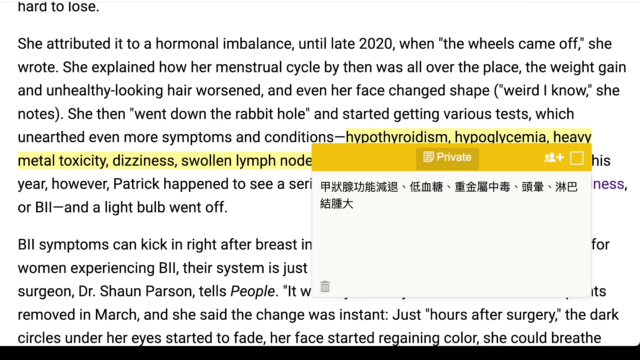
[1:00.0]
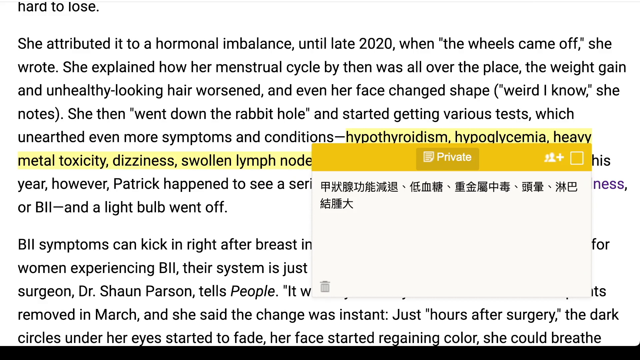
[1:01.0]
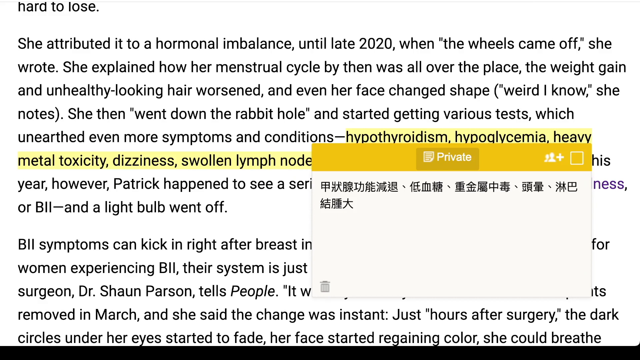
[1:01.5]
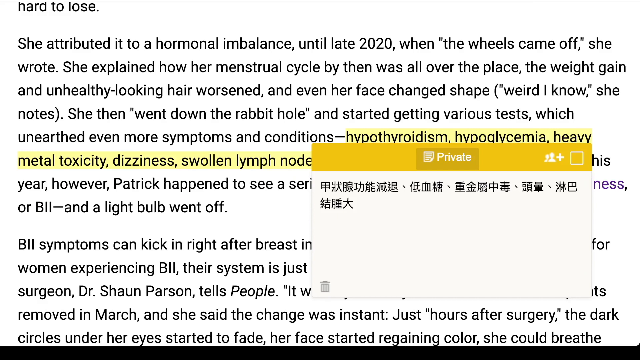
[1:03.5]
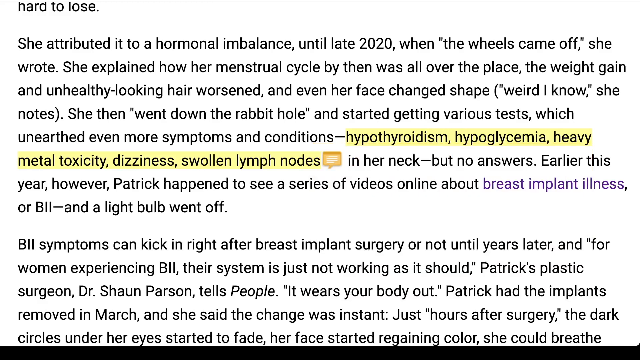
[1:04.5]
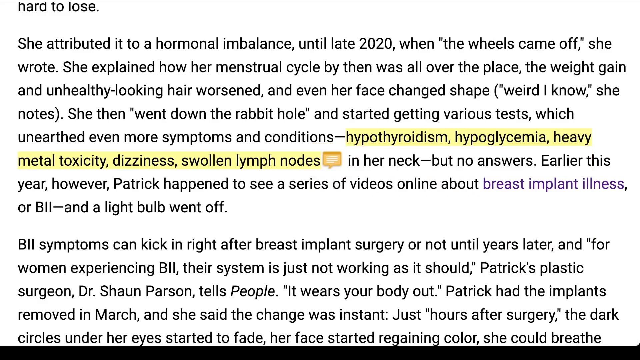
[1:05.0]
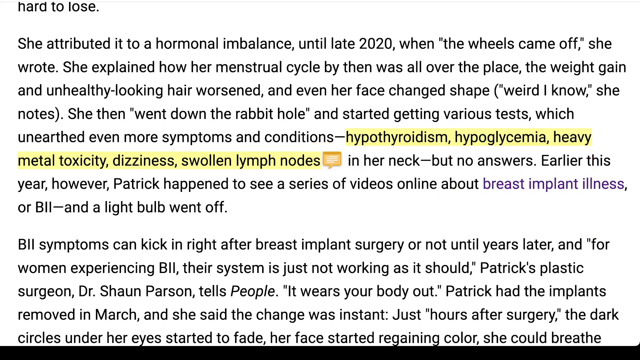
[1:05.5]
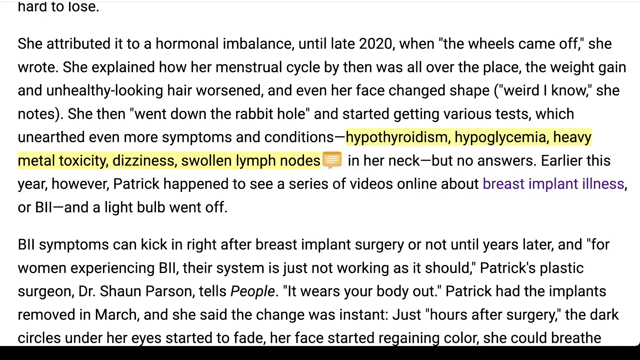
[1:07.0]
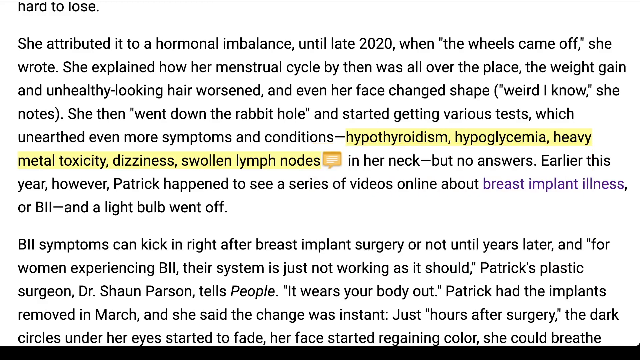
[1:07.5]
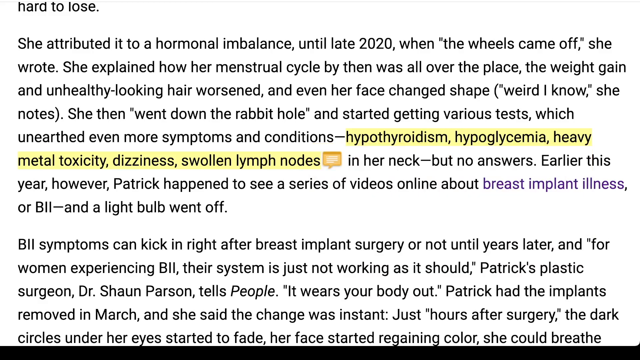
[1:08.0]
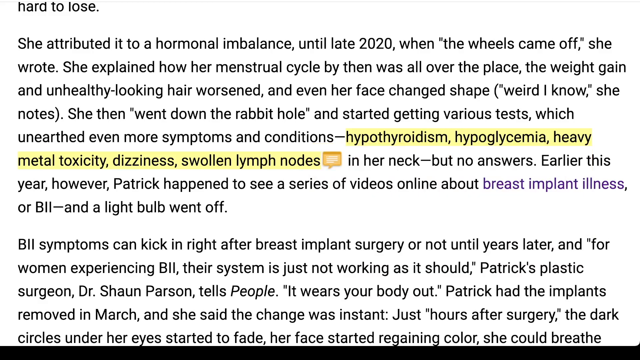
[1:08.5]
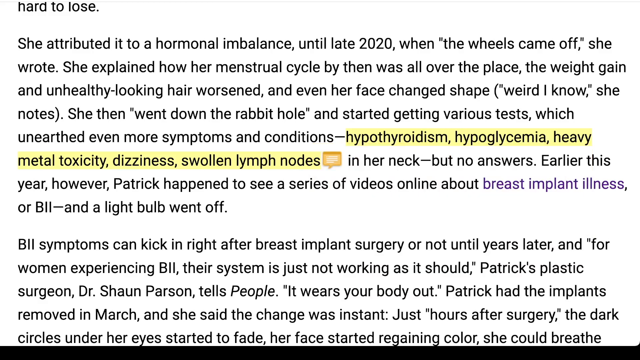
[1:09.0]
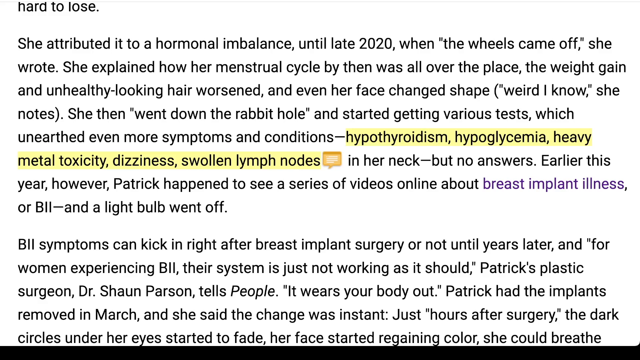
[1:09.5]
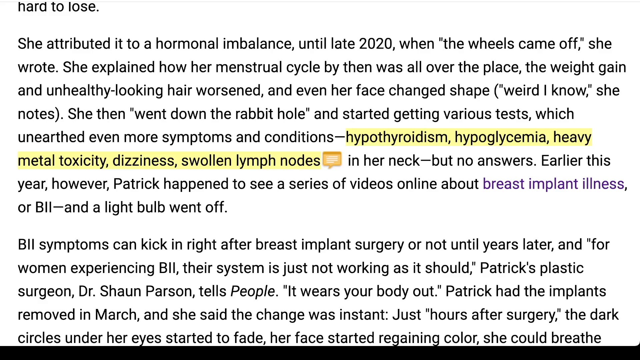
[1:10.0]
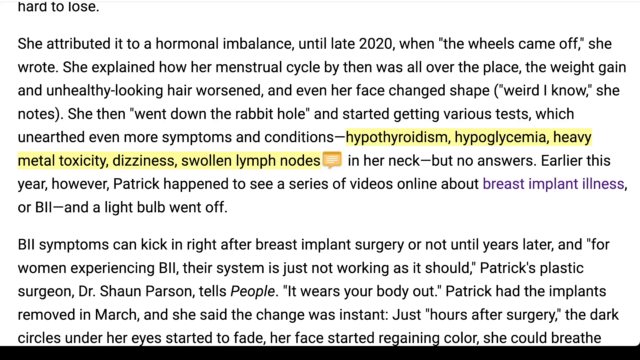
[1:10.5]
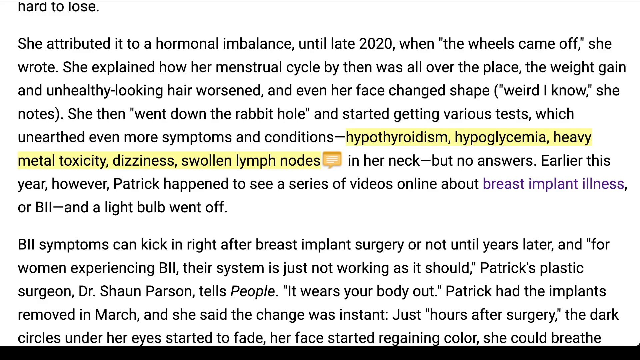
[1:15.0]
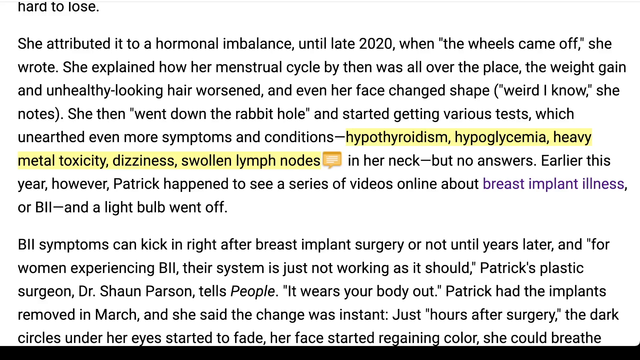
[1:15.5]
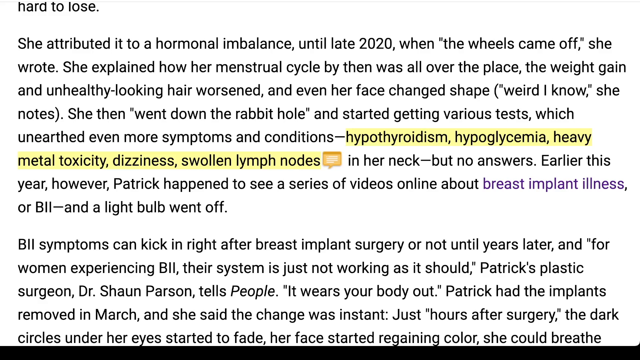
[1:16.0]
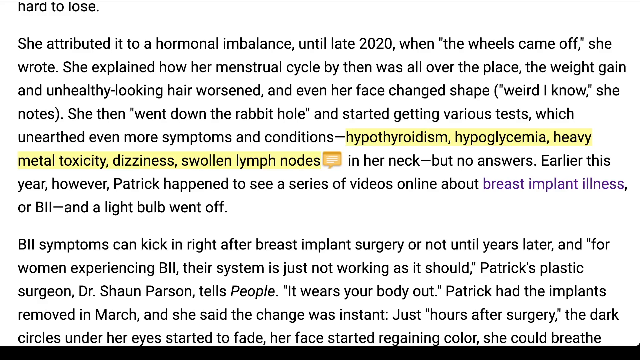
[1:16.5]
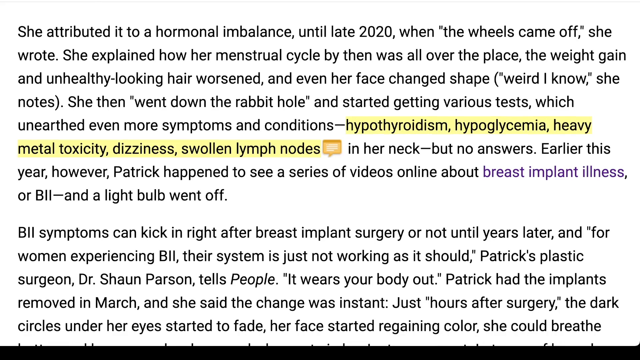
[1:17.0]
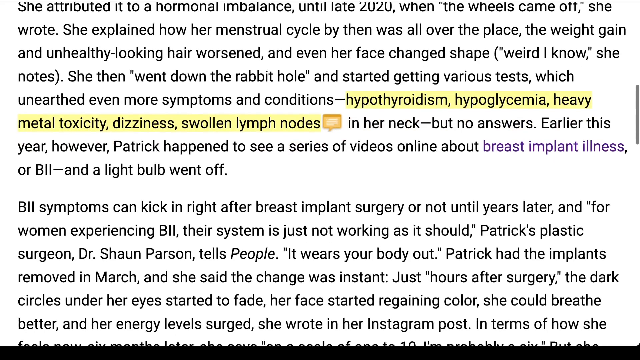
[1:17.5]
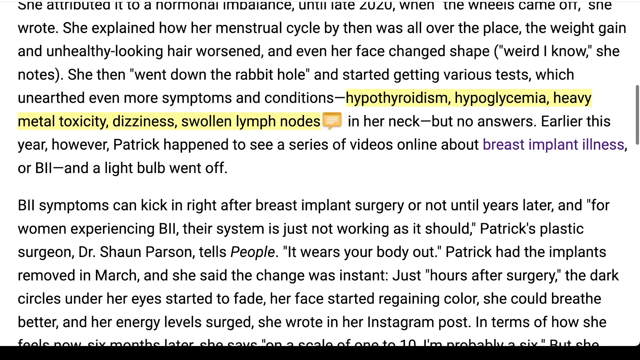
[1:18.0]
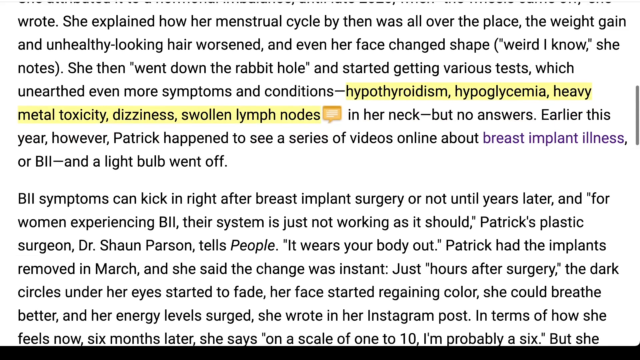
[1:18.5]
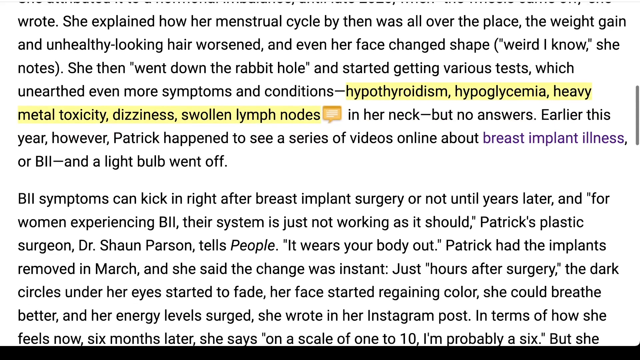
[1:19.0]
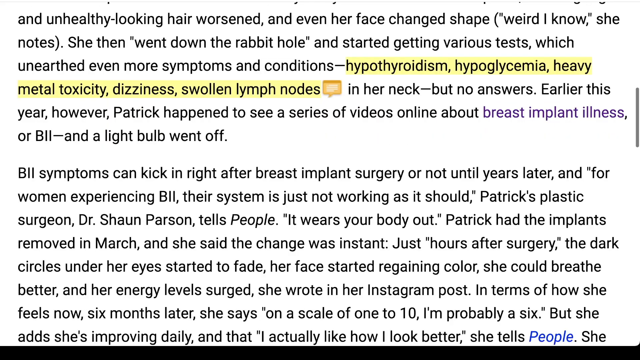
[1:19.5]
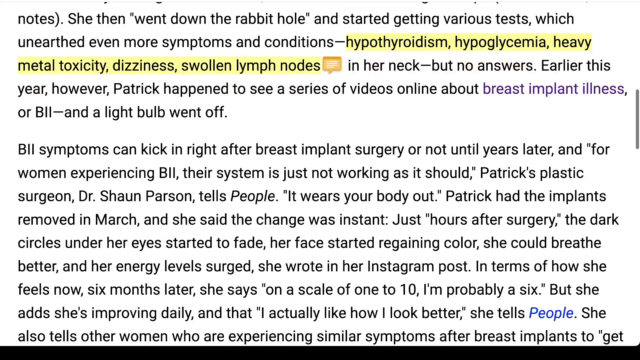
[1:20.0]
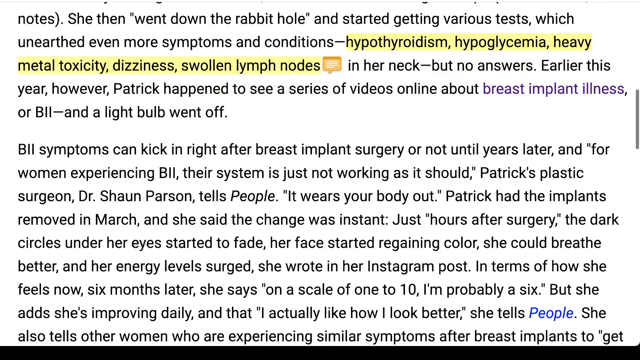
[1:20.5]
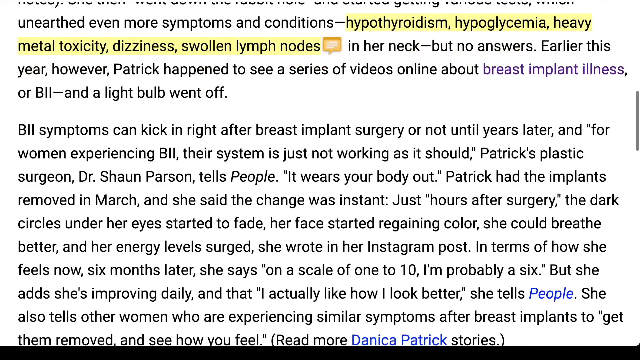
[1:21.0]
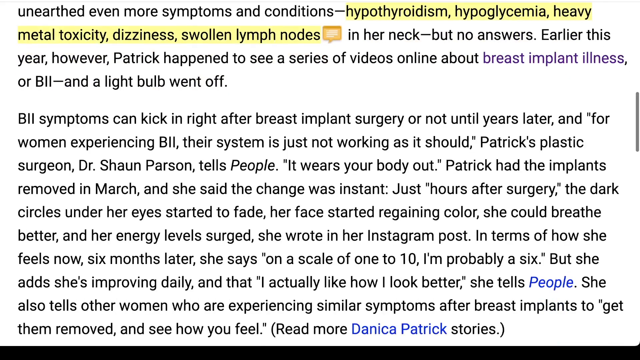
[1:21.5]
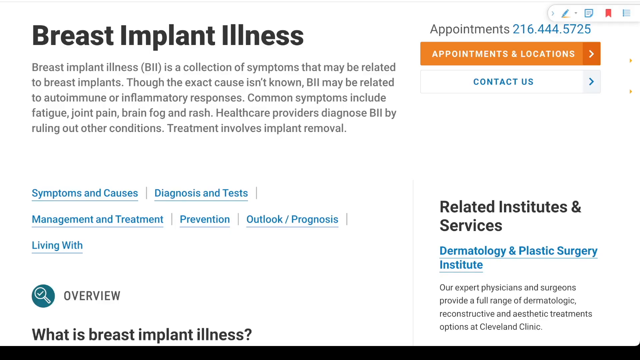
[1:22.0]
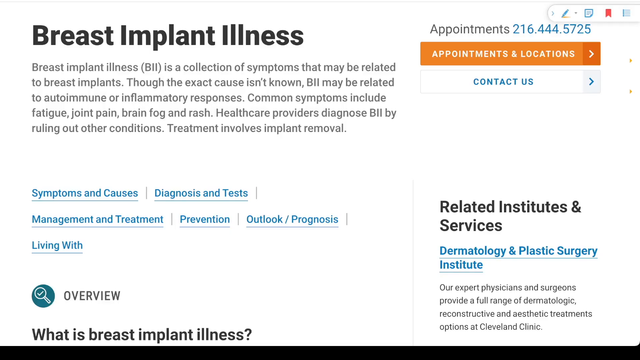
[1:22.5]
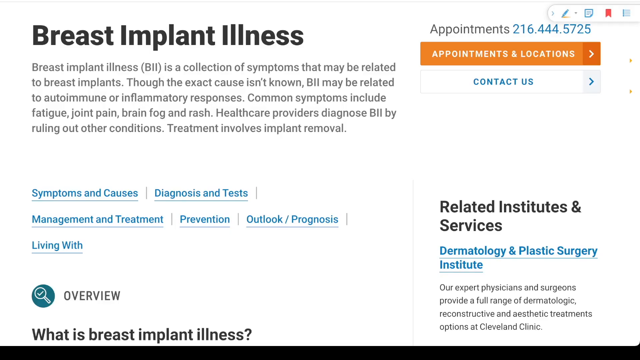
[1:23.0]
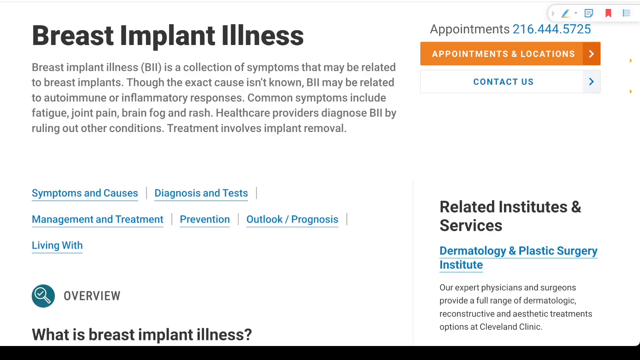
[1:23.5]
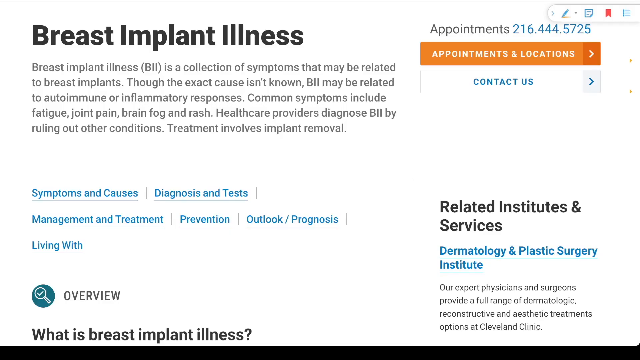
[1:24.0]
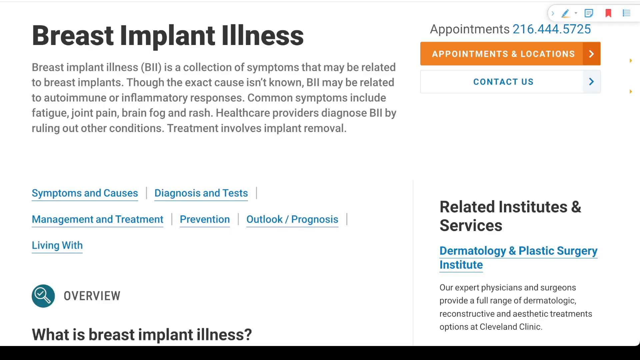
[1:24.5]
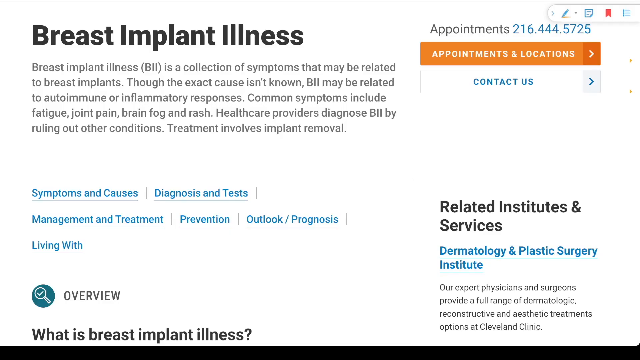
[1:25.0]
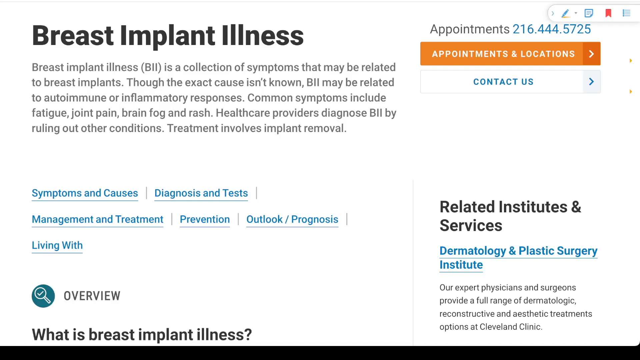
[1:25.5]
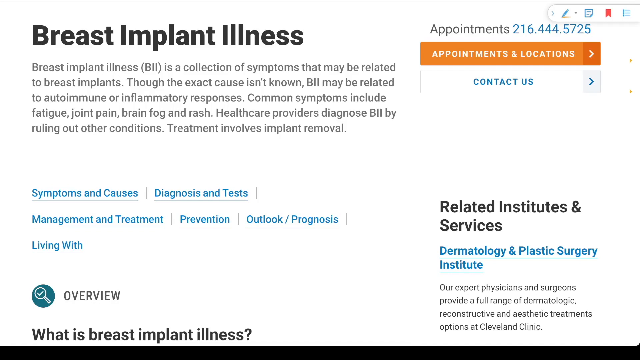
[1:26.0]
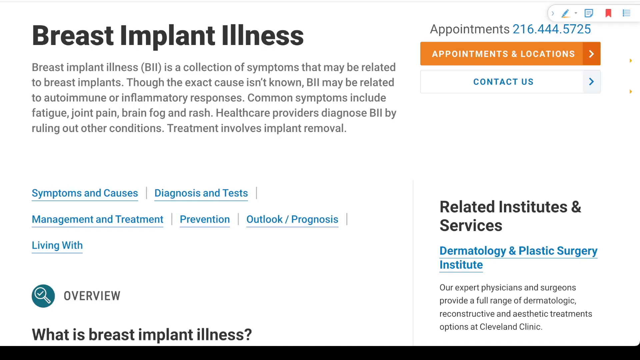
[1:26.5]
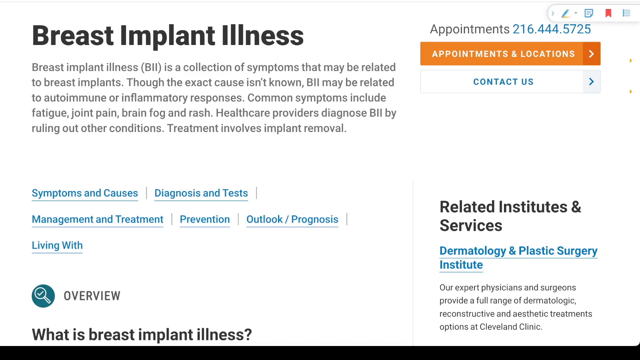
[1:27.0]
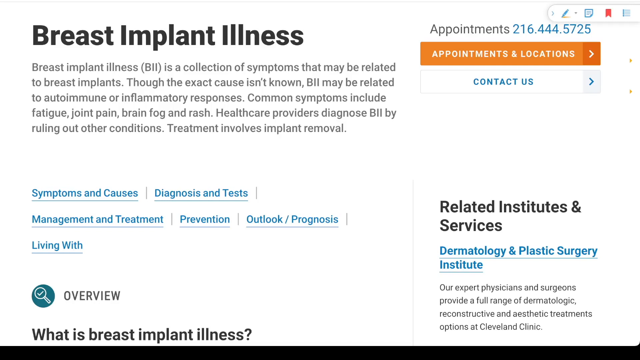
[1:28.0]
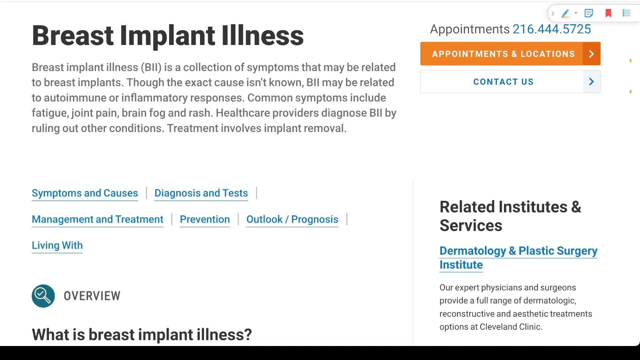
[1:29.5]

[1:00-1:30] The chat box is still up without moving, and then it disappears. The article has not changed; this part covers hormonal imbalances and symptoms that can follow breast implant surgery, with quotes from Patrick about how it wears the body out. The view then jumps to a page about breast implant illness that looks like a doctor's page in a WebMD-style setup. The heading "breast implant illness" is in black, and the text describes breast implant illness as a collection of symptoms that may be related to breast implants. To the right is an ad for appointments with a phone number, apparently a focus on locations, and a contact us tab. Below is a series of links: cases and causes, diagnosis and tests, management and treatment, prevention, and prognosis, arranged with two on the first line, three on the second and one on the last. In the bottom right of the frame is a related institutes and services section listing "Dermatology and Plastic Surgery Institute."